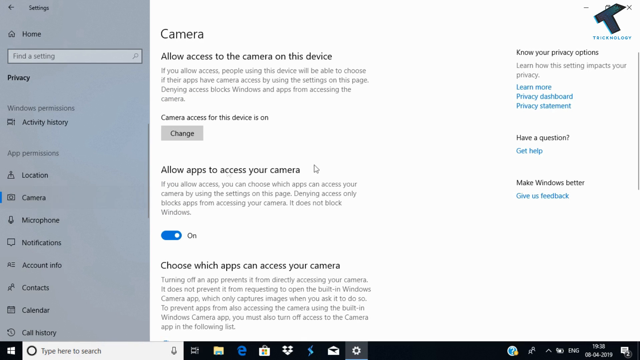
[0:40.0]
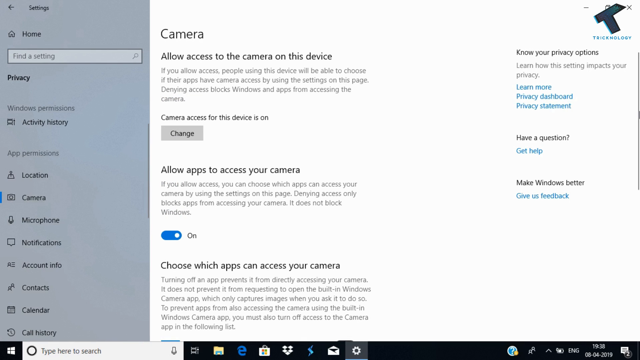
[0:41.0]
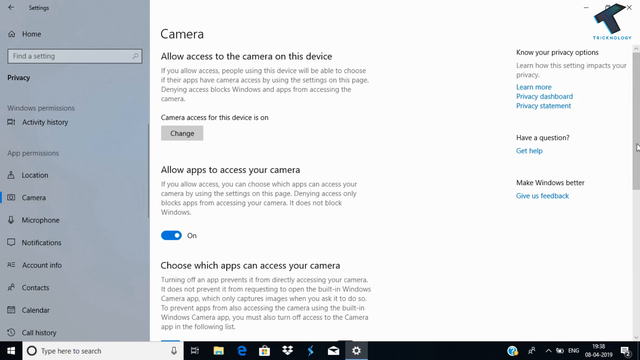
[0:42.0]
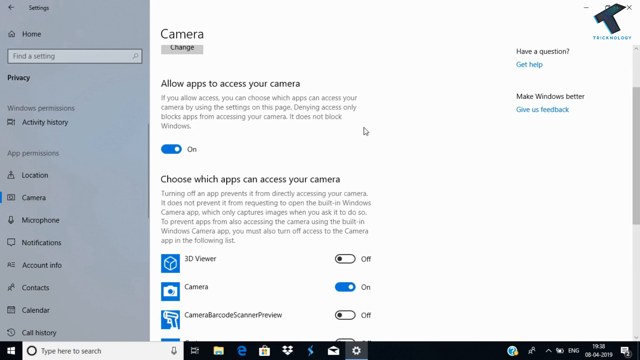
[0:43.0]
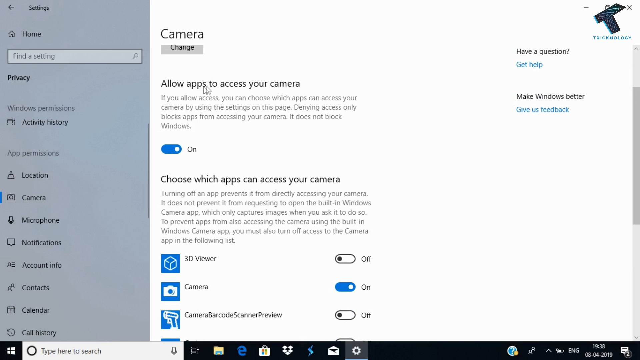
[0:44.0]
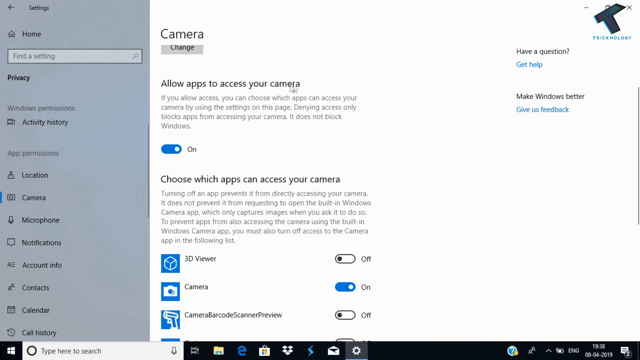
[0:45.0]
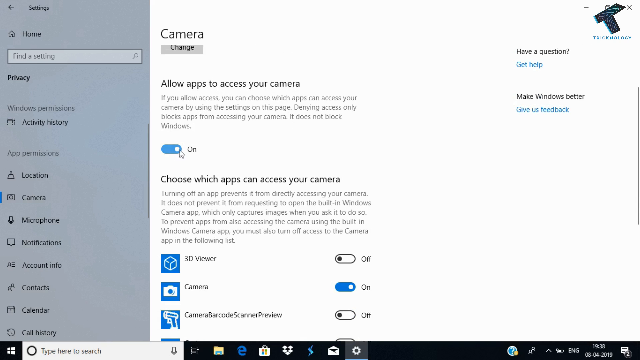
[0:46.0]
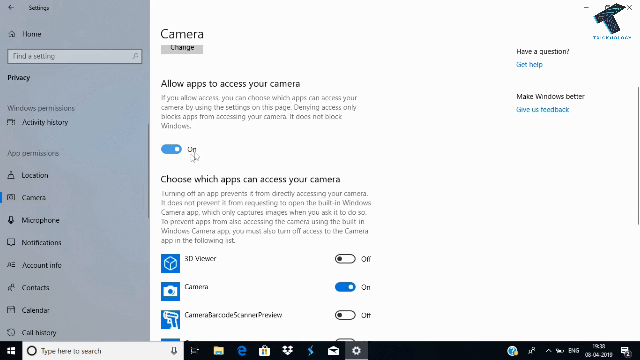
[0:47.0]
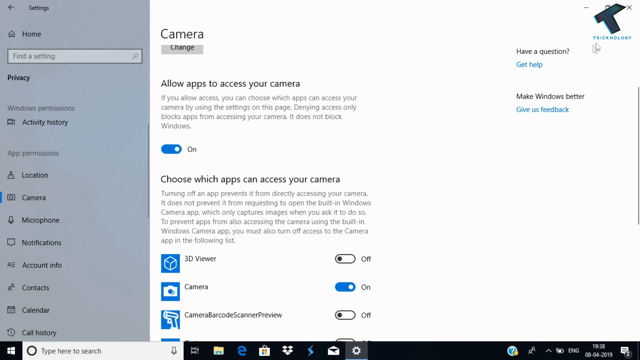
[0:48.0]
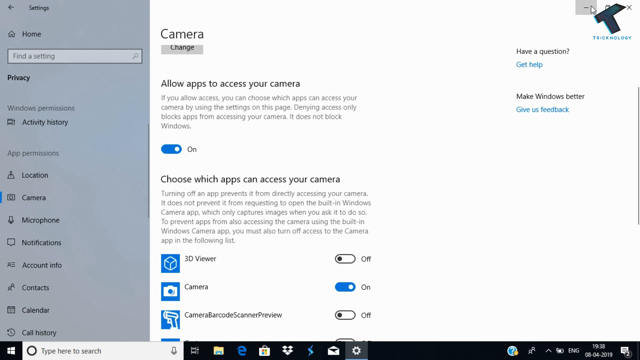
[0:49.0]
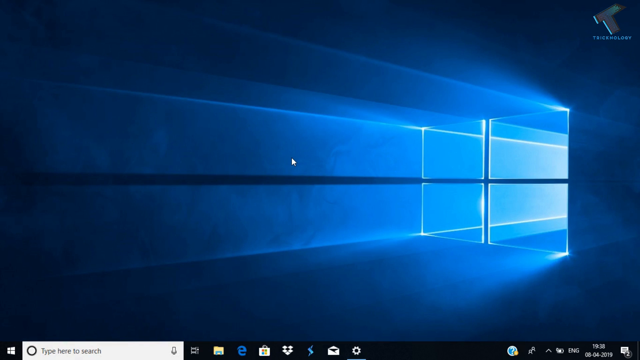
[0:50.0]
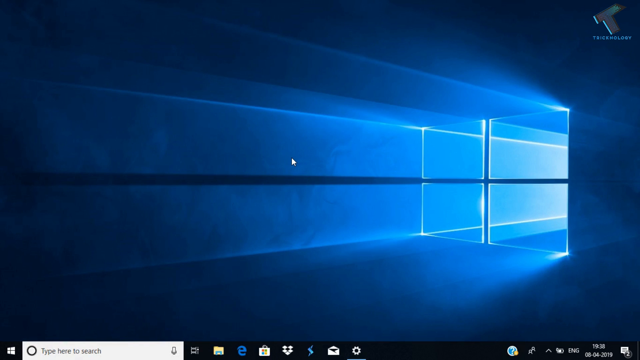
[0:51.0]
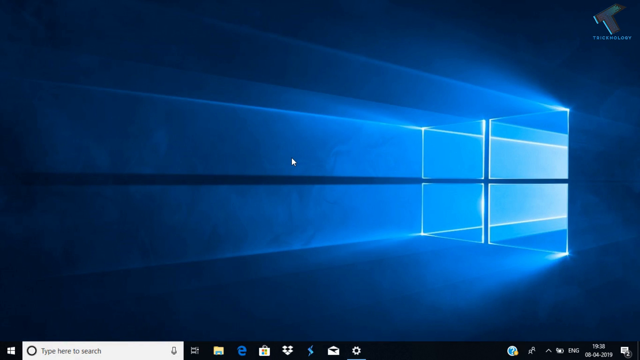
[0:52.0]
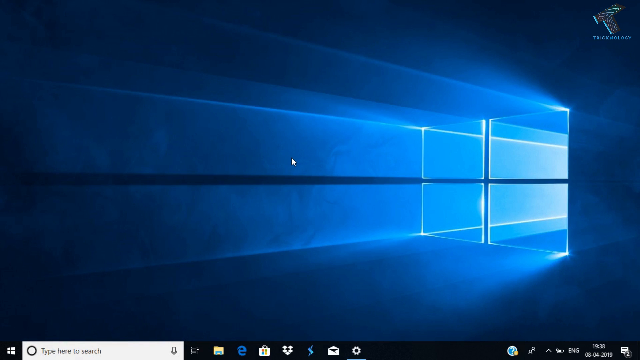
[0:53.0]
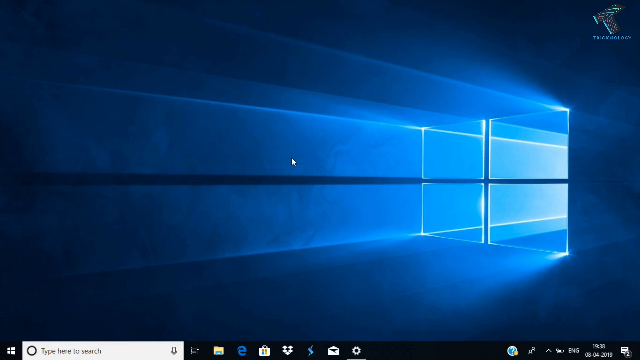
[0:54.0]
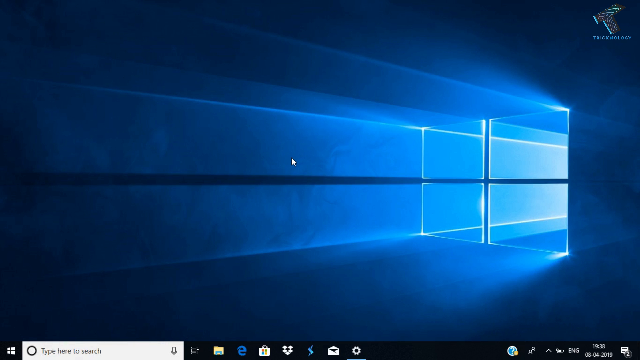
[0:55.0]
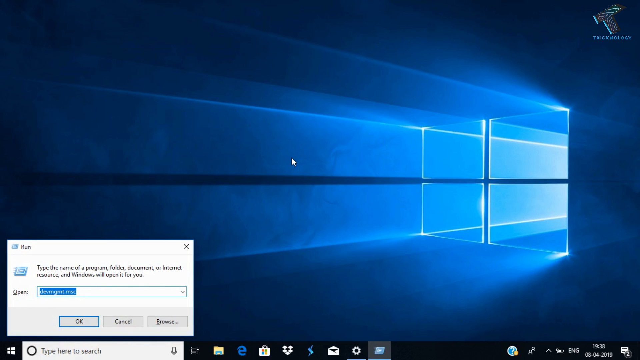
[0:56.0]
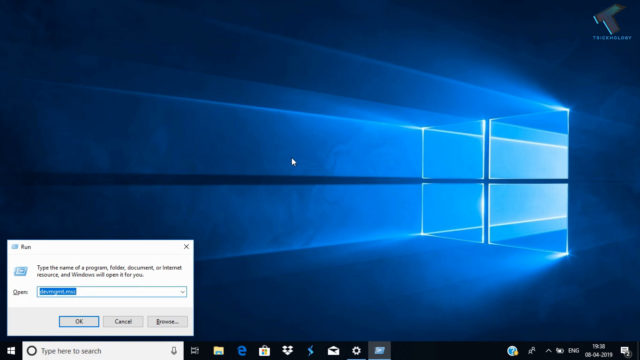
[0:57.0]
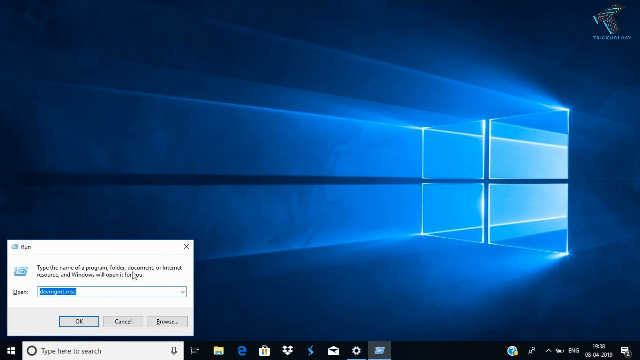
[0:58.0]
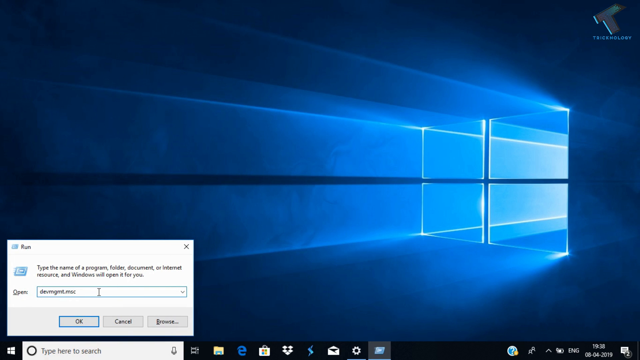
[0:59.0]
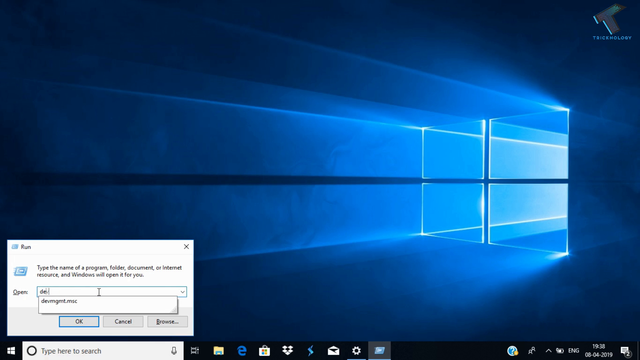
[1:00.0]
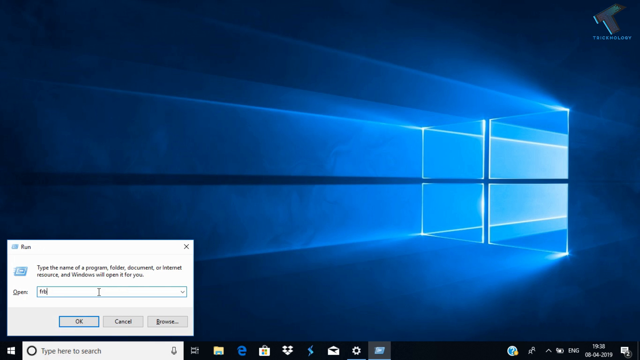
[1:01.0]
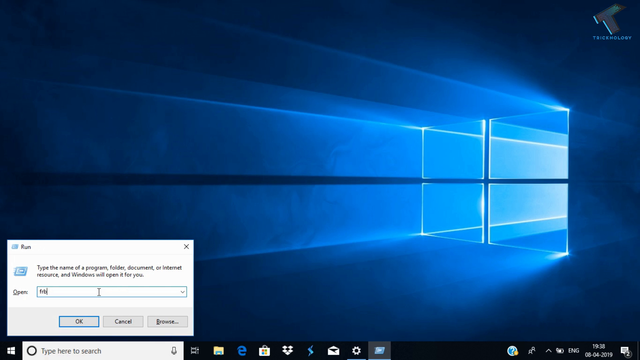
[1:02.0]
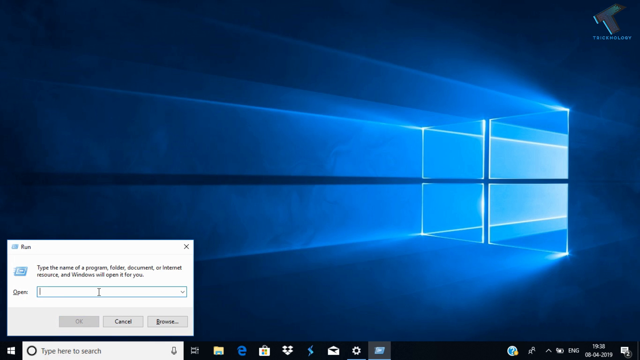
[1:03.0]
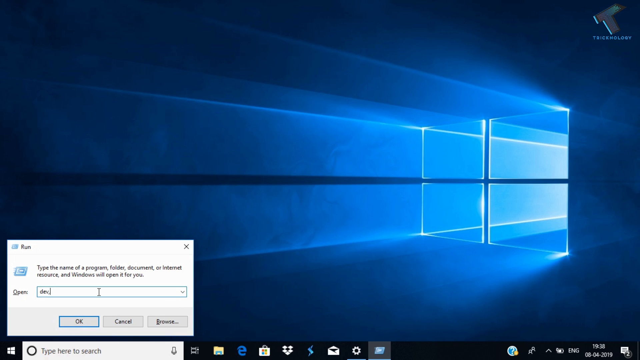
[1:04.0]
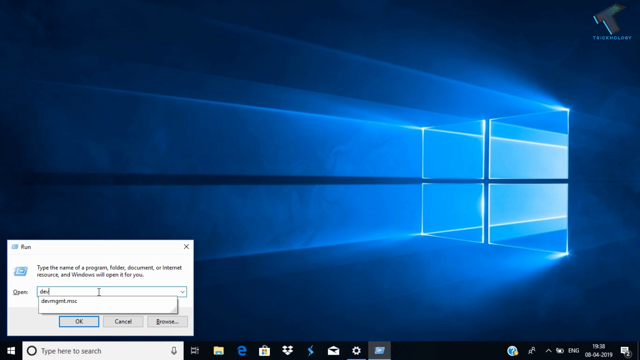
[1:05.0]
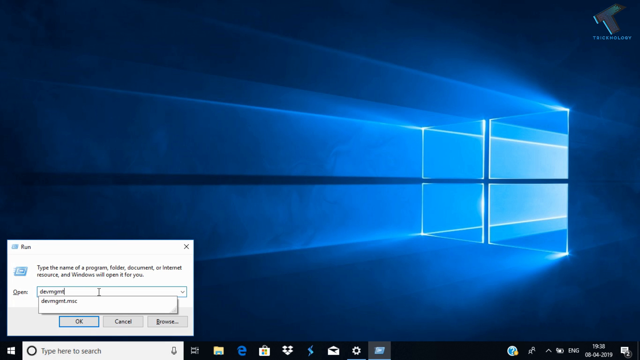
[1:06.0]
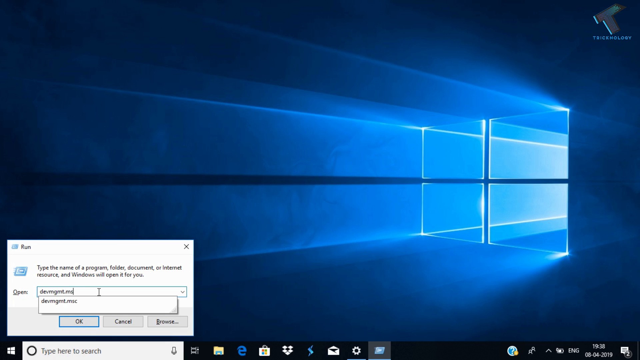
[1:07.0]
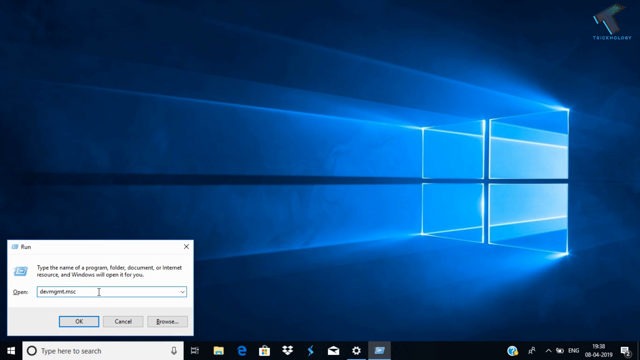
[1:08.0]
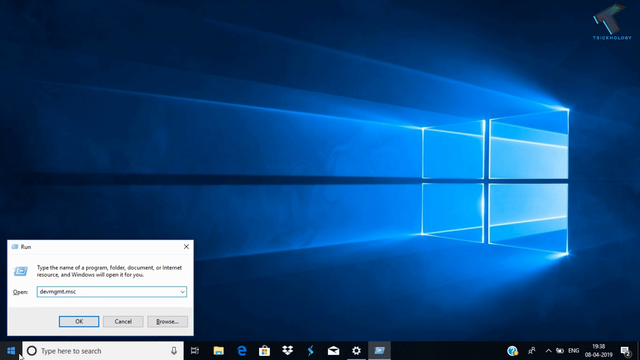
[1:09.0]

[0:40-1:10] The cursor taps the camera app and scrolls down to text that says "allow apps to access your camera". The cursor hovers around and encircles the on button, emphasizing that the camera has to be on. The cursor then moves toward the upper right to the minimize tool, and the window is minimized, revealing the desktop with the blue screen and the Microsoft icon. A small box appears on the lower left-hand side; its text is a little hard to read but seems to say "menu". The cursor hovers on the bar, signaling a rename, and a new name is put on the bar. Then the taskbar is tapped.